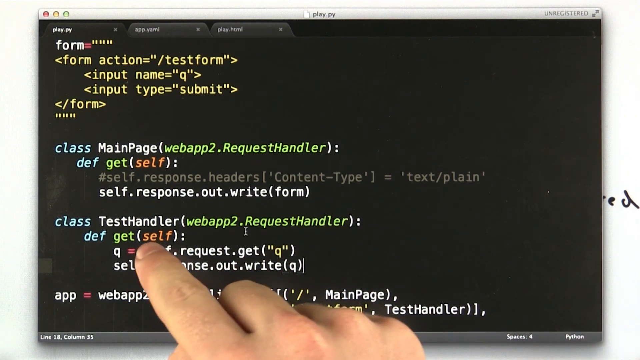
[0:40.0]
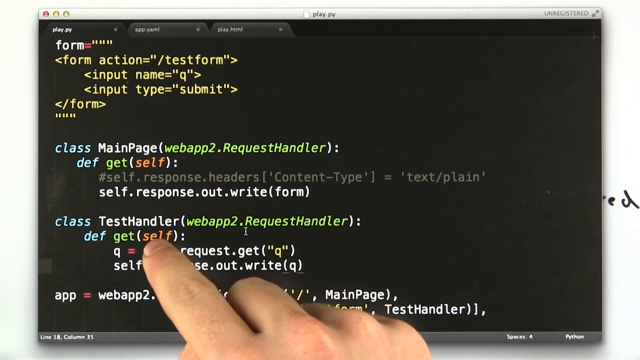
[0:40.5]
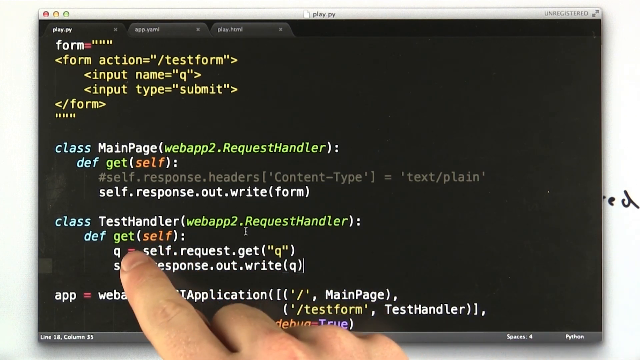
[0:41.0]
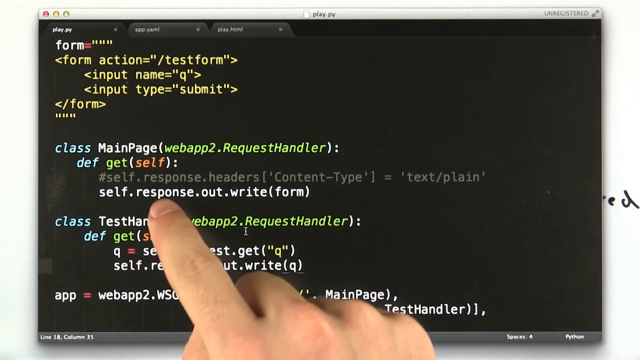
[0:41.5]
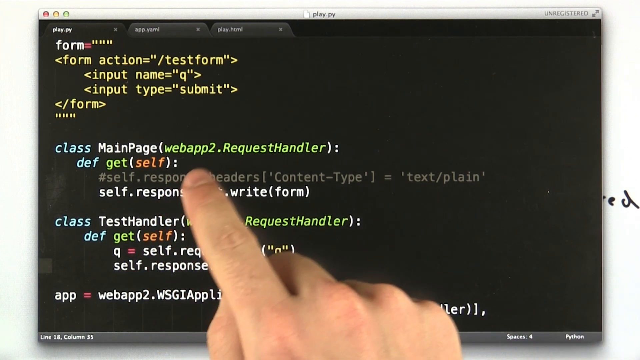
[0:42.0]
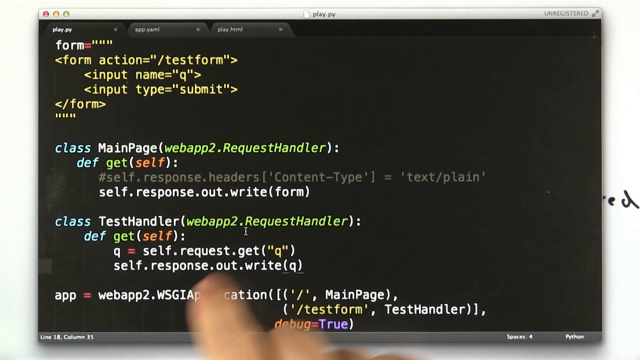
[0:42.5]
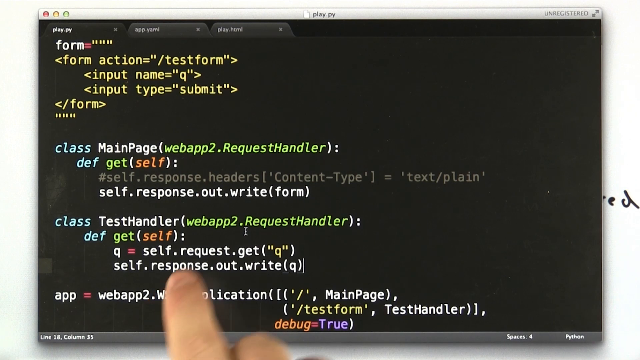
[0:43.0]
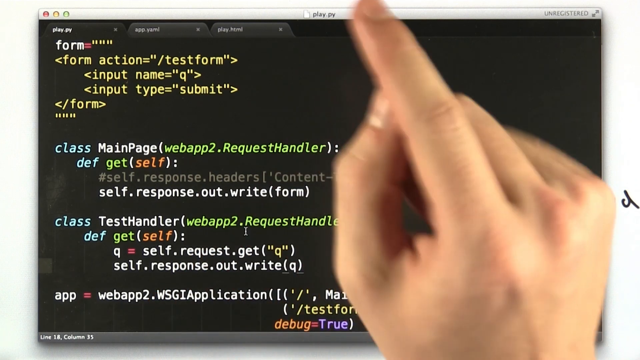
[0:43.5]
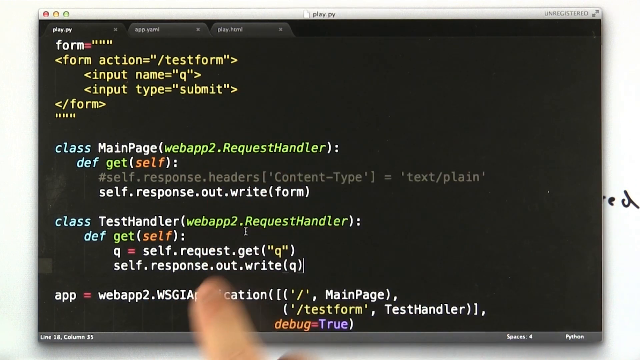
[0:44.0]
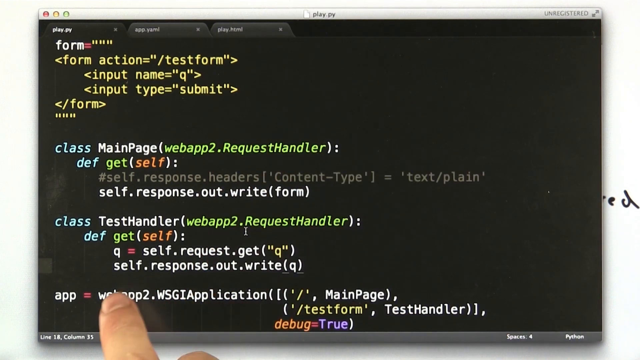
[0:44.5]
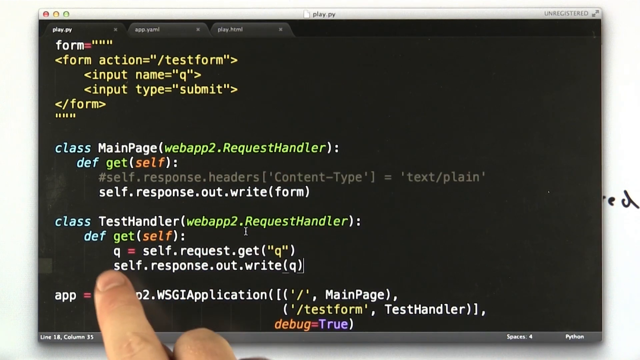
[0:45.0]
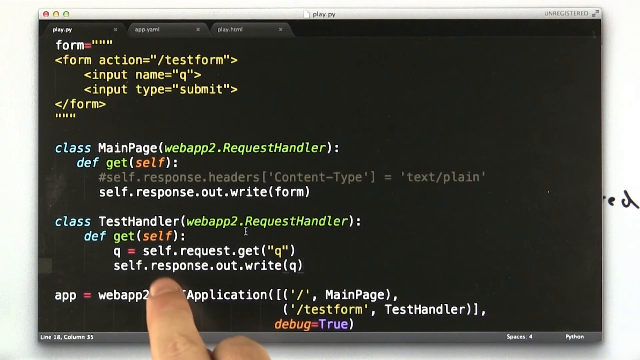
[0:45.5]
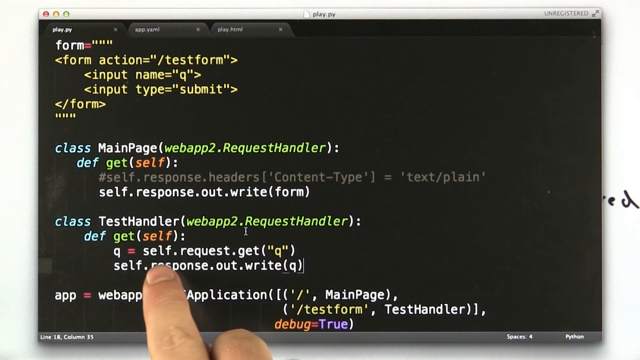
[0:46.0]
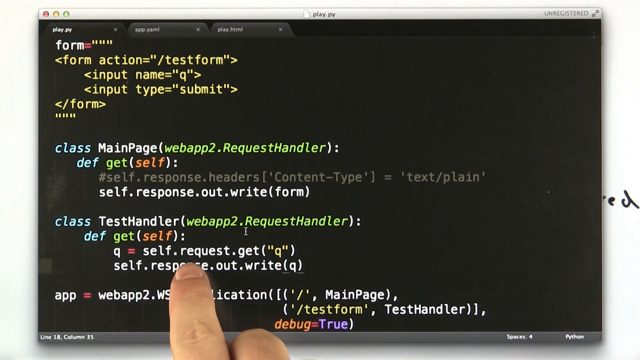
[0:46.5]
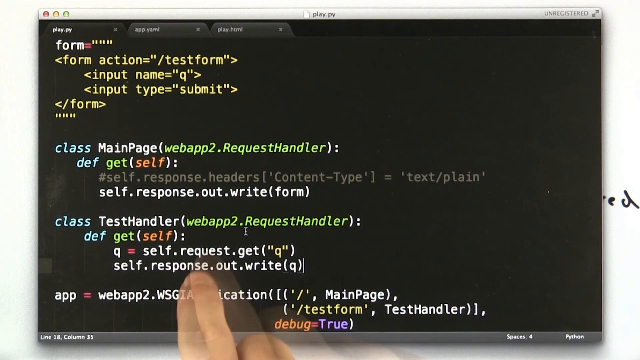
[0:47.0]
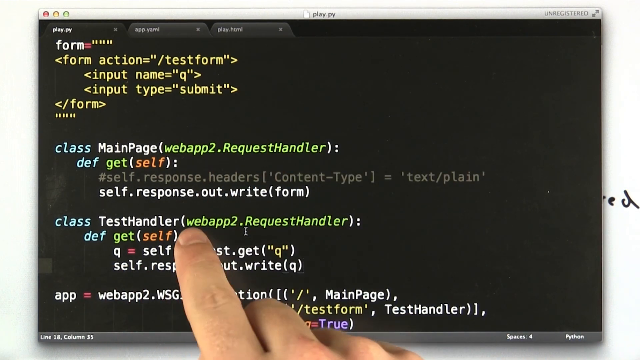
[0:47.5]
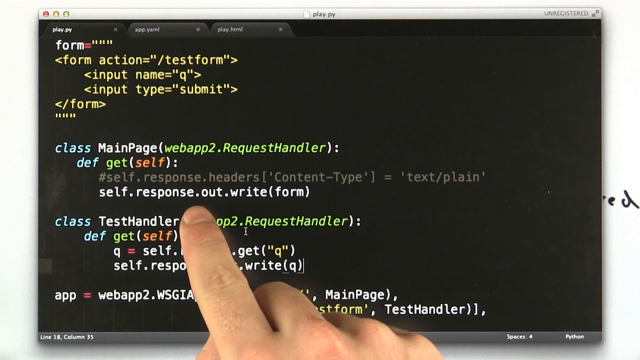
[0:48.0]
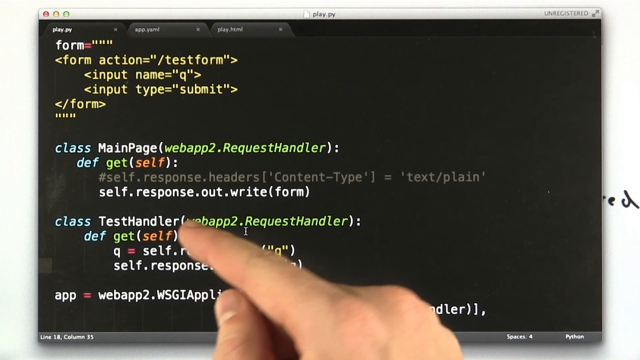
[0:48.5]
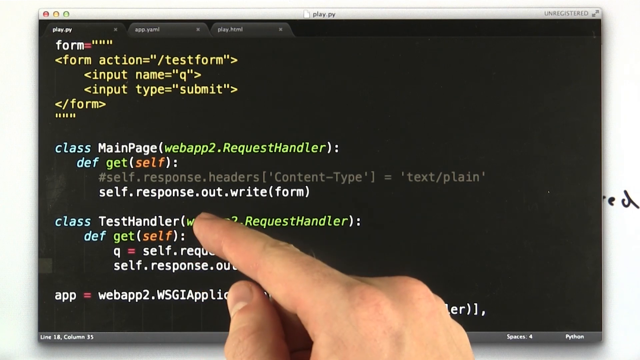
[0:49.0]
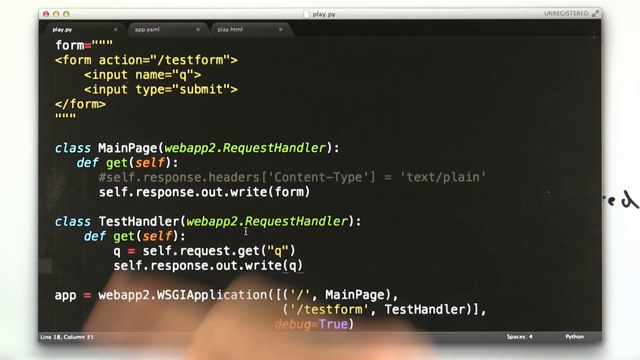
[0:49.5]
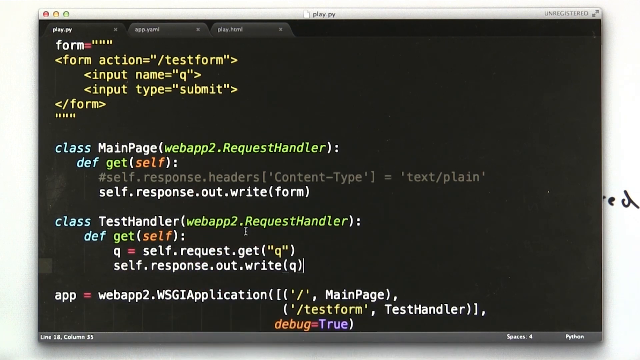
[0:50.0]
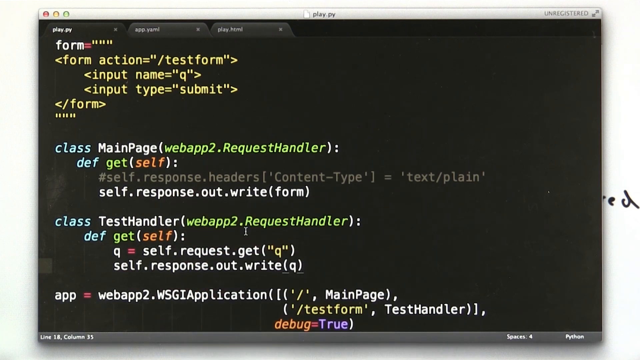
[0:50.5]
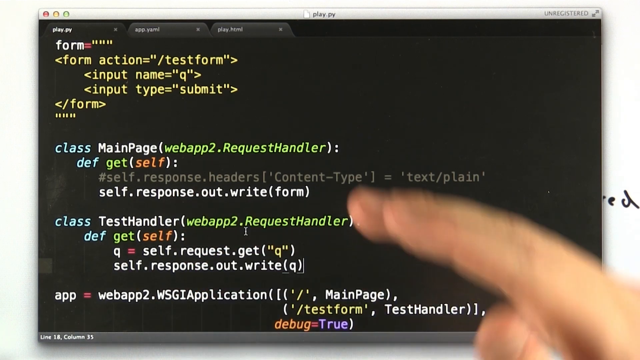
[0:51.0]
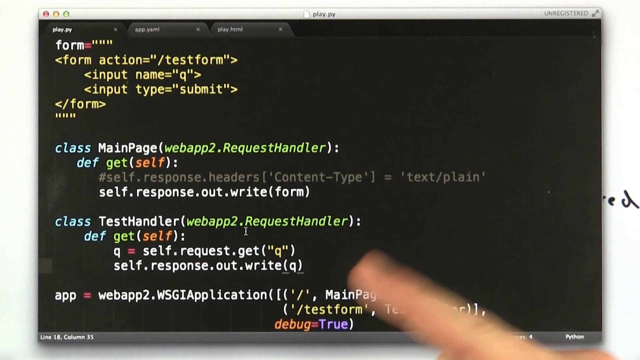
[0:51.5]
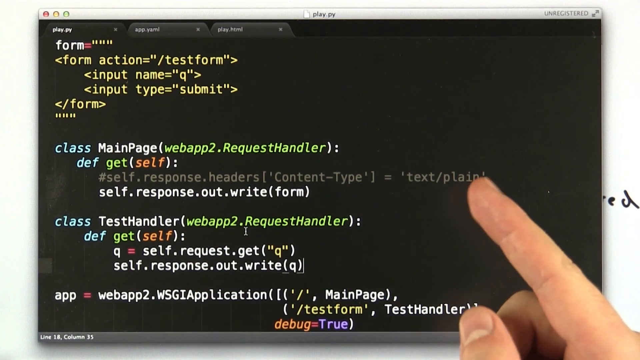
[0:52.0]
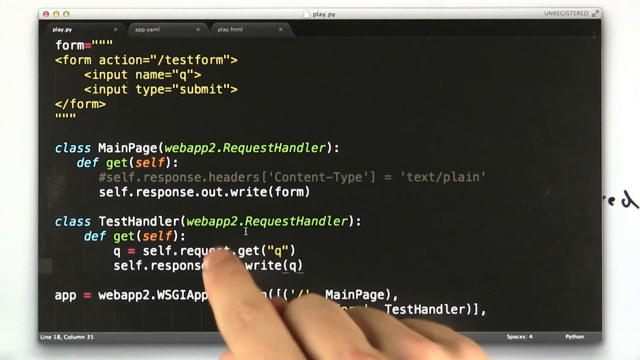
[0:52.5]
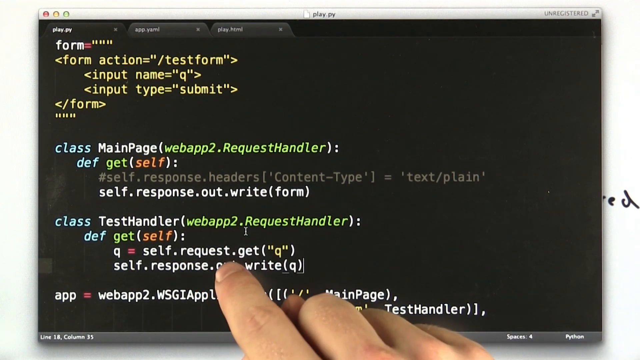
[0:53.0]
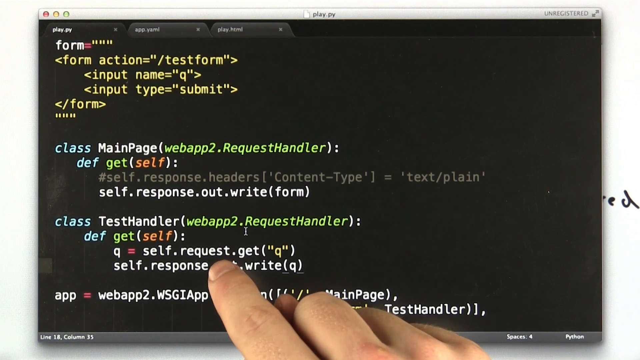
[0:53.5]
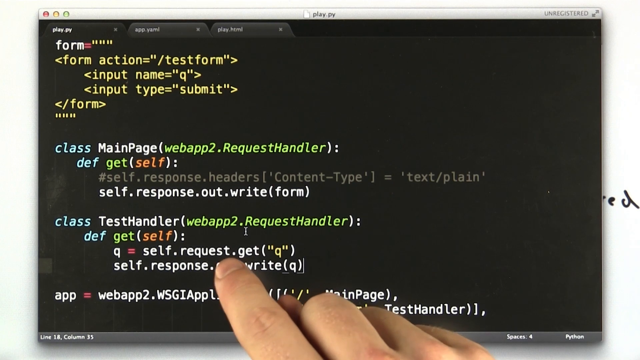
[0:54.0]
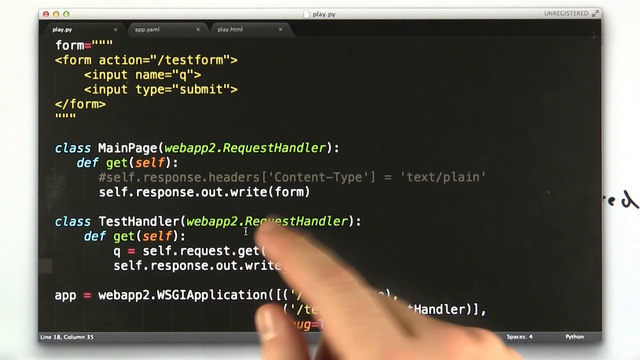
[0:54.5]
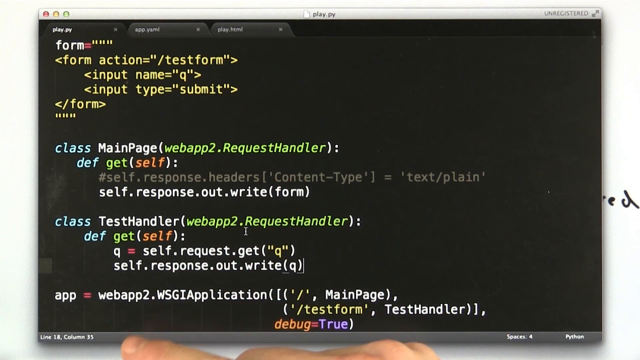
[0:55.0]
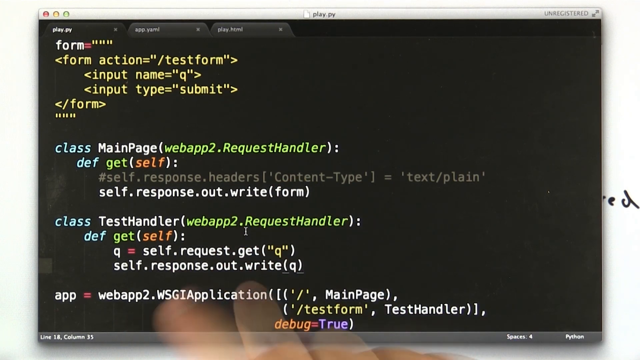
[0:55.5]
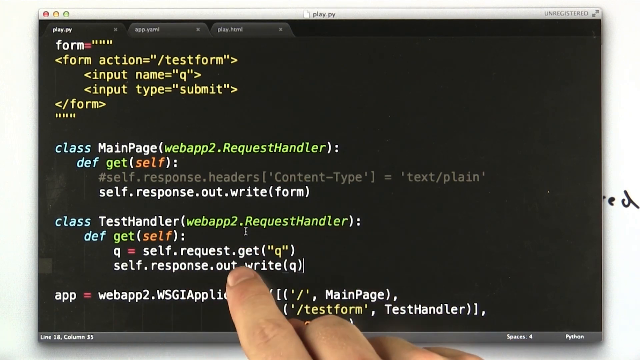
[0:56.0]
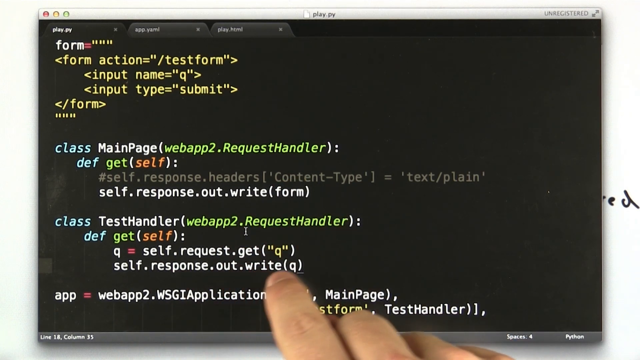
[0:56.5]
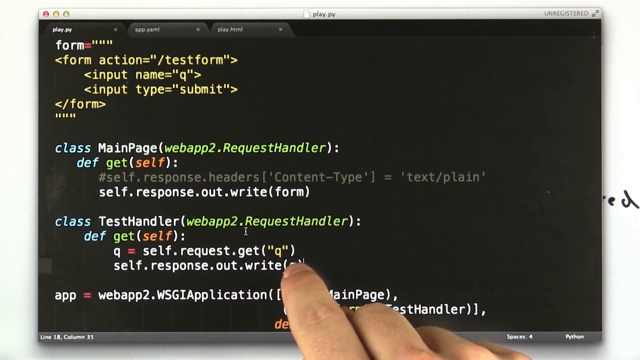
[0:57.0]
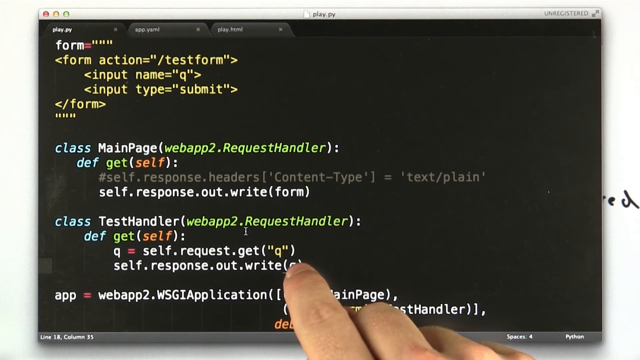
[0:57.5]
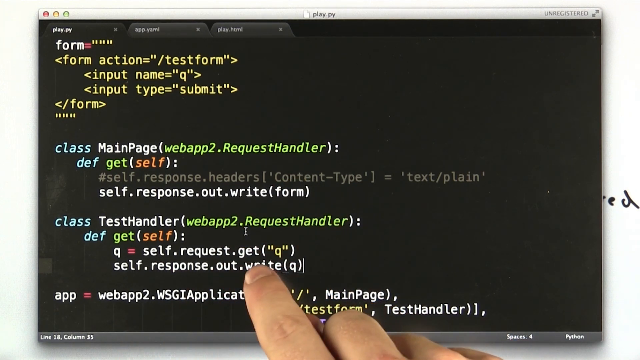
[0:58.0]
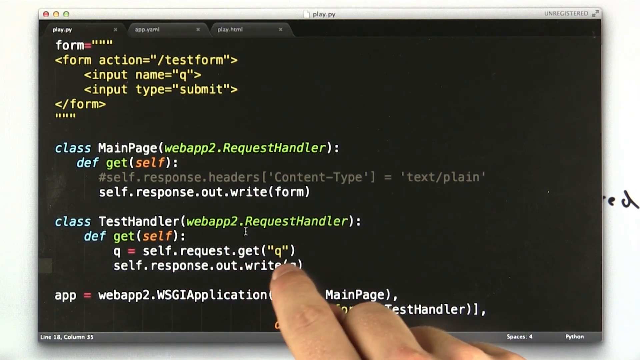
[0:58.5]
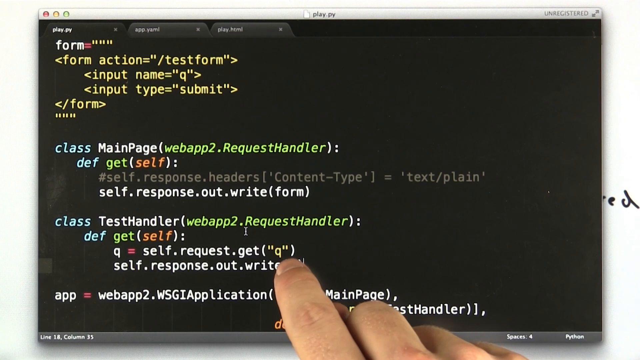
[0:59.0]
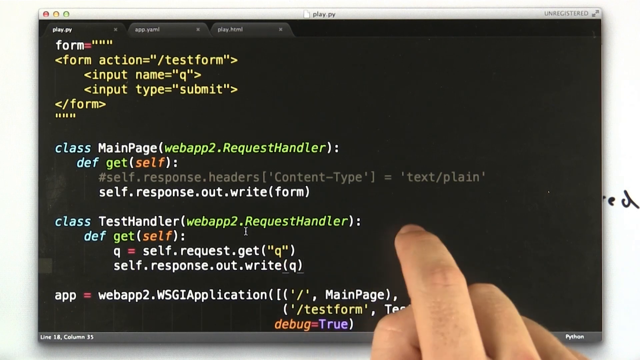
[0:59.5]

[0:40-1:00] A white banner runs across the top with three bulbs, one red, one yellow and one green. In the middle is the document name, play.py, and in the right corner the software is shown as currently unregistered. Under the banner are a few tabs: the open tab is play.py, the rightmost tab is app.html, and there is also play.html. Below is the code, starting with "form =", which is being worked on by the developer. His finger points toward various areas of the code; he lifts his finger up and down, there are cuts, and then his finger appears again.